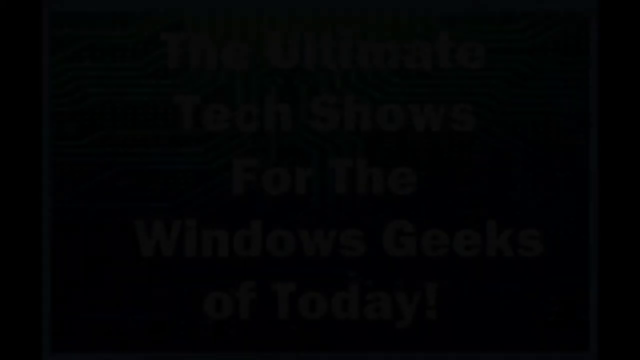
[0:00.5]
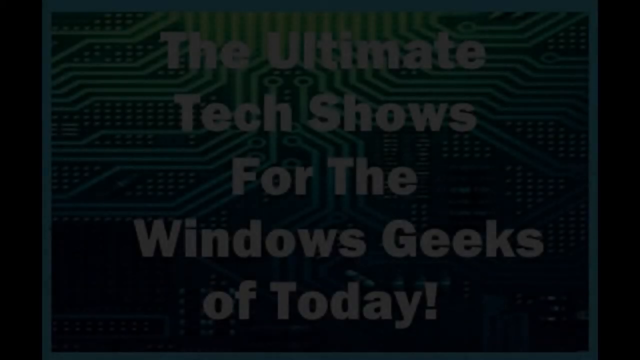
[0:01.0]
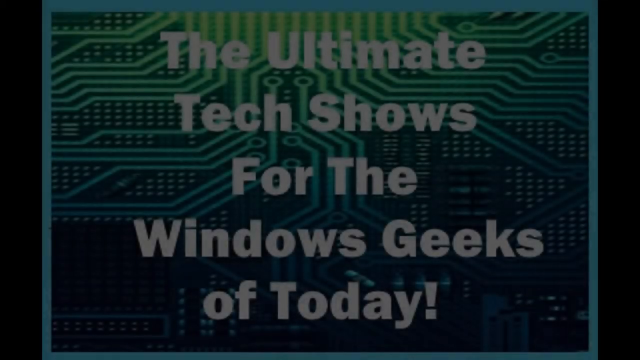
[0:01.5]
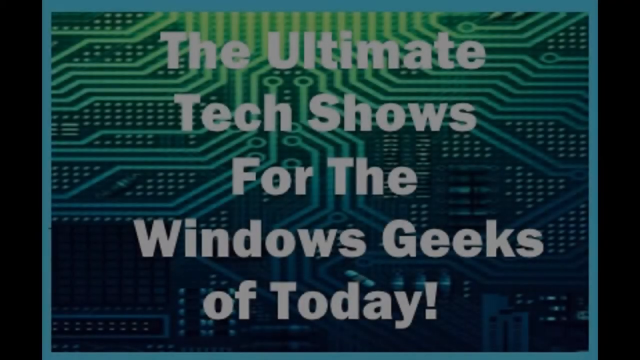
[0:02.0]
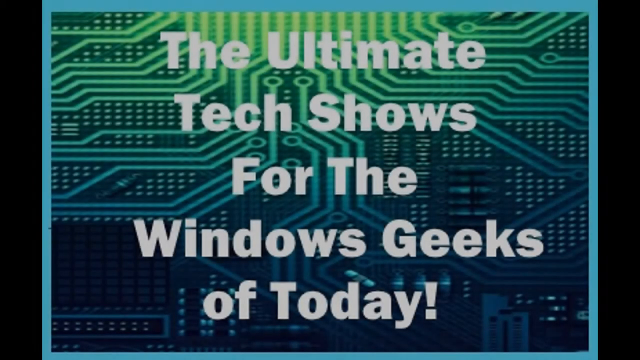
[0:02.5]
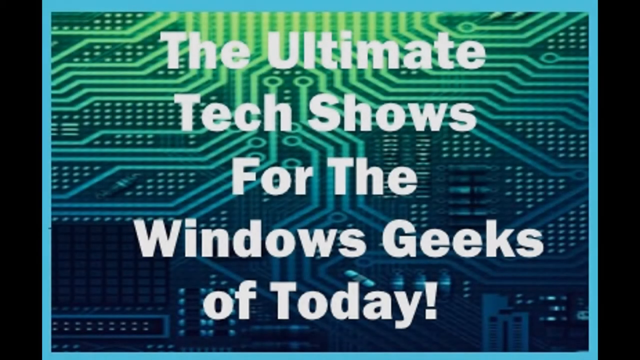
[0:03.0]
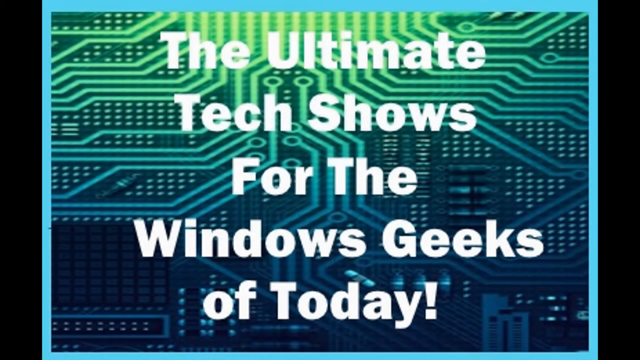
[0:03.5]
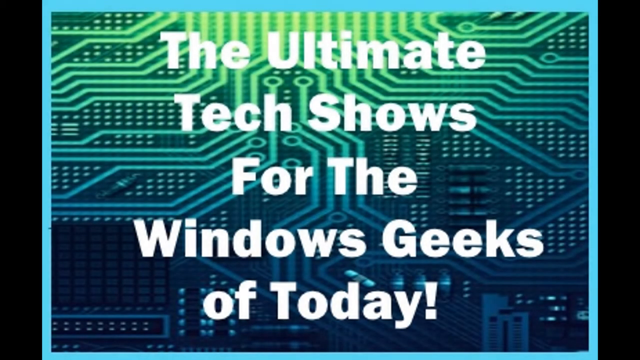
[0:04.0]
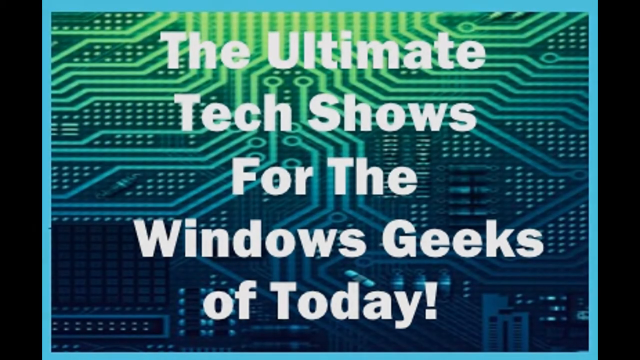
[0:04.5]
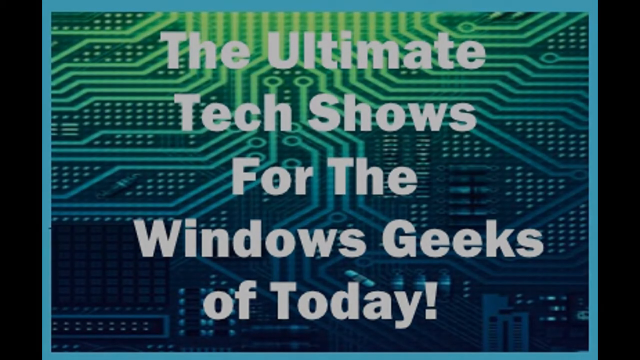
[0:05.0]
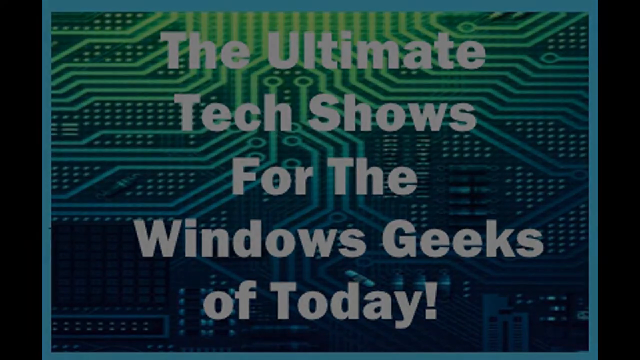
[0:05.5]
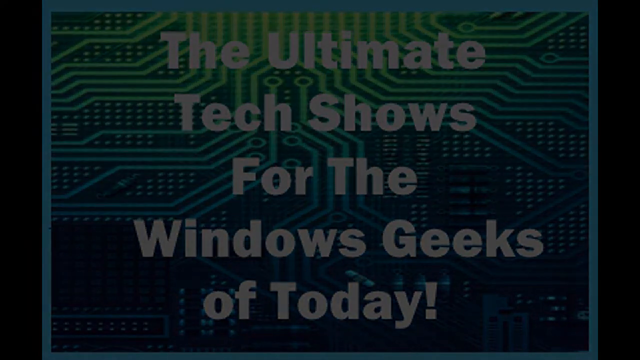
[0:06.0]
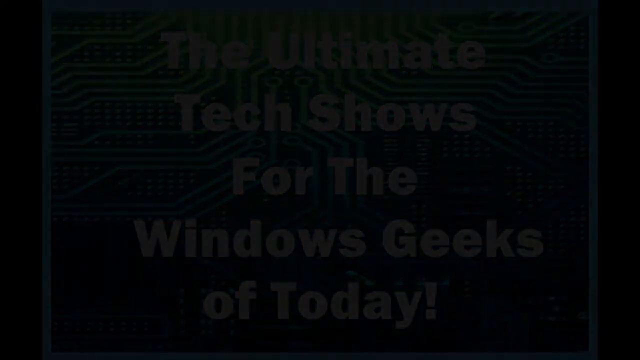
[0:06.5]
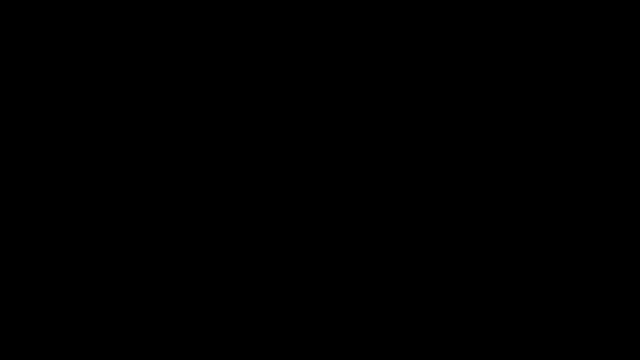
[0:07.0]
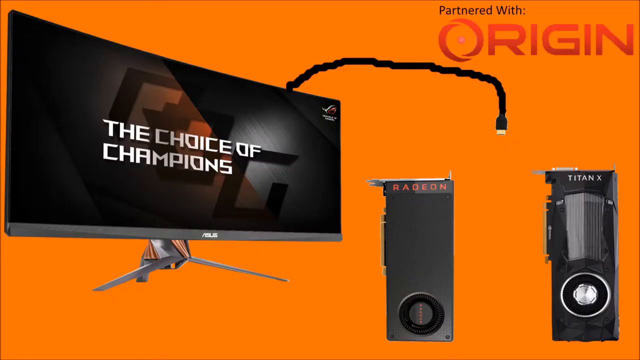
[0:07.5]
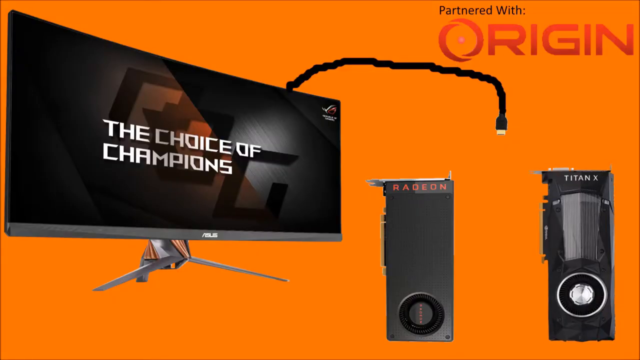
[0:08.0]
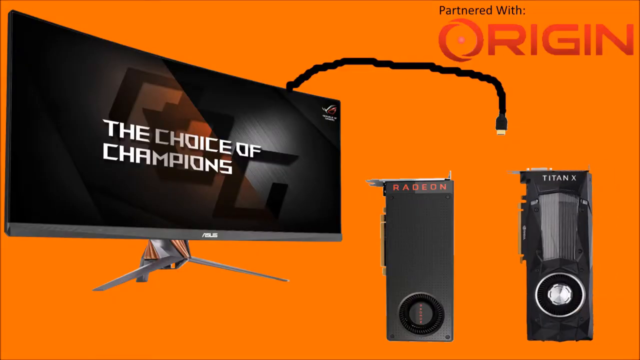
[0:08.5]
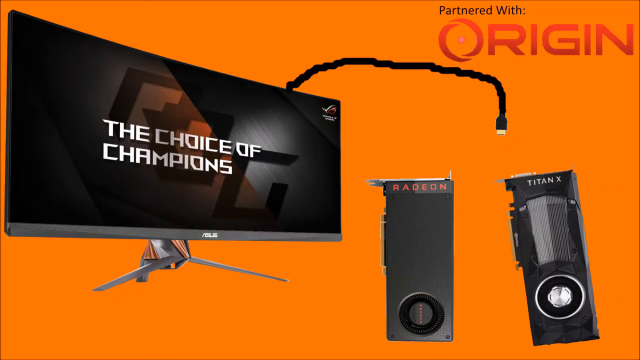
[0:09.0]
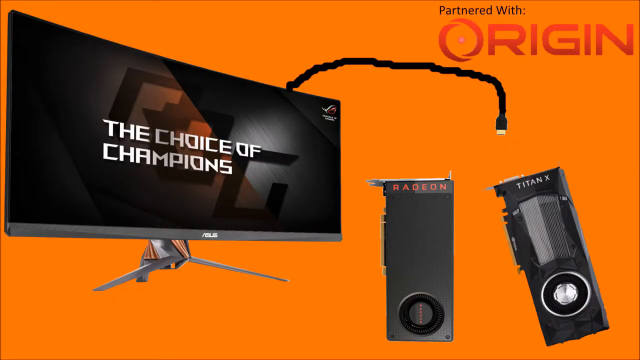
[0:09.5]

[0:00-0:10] The video opens with the text "the ultimate tech show for the Windows geeks of today!" over a background of circuitry, and it is partnered with Origin, the choice of champions. An Asus monitor is on the left, a Radeon video card is on the right, and a Titan X video card is on the far right. The Titan X video card slowly moves. The screen's background color is orange, and the picture quality looks pretty cheesy.